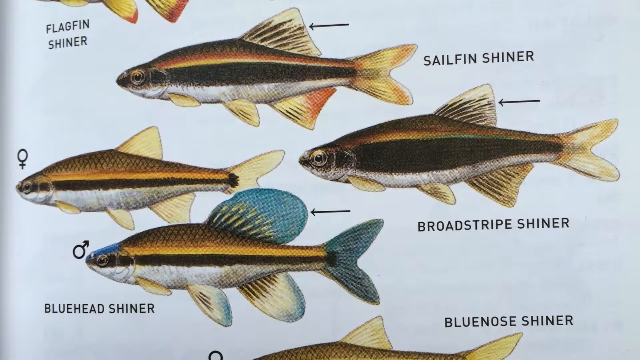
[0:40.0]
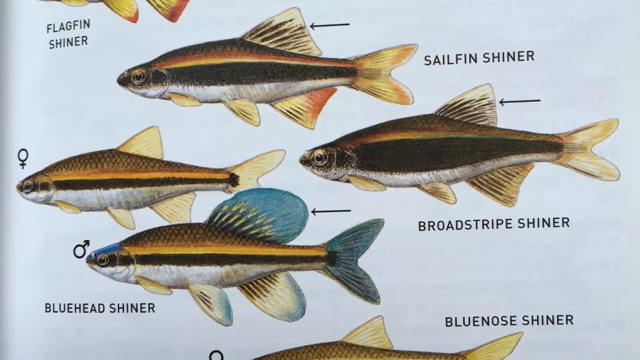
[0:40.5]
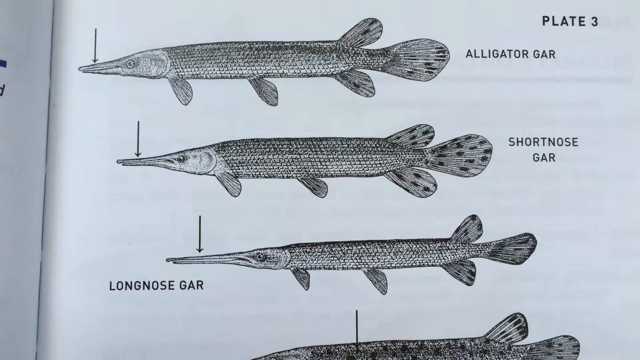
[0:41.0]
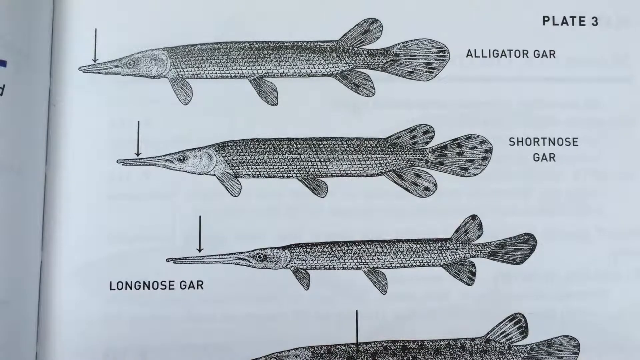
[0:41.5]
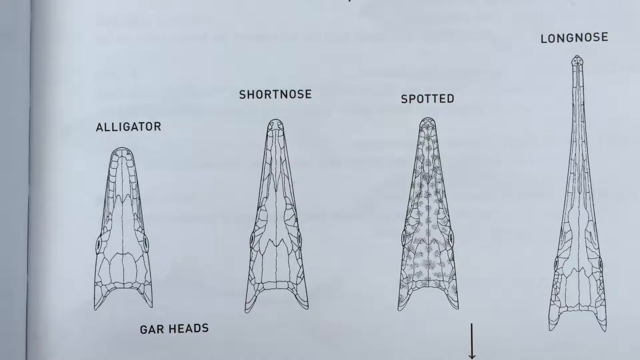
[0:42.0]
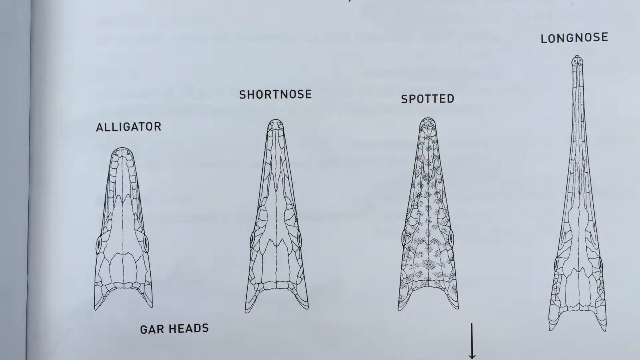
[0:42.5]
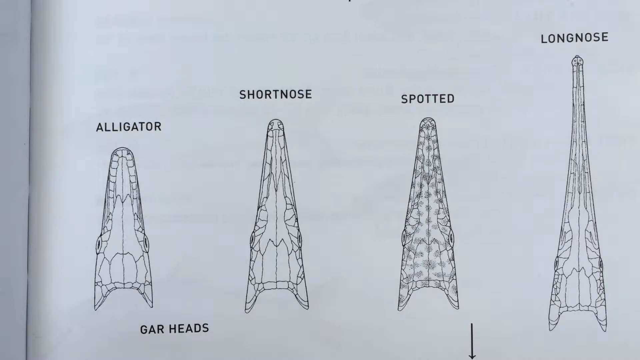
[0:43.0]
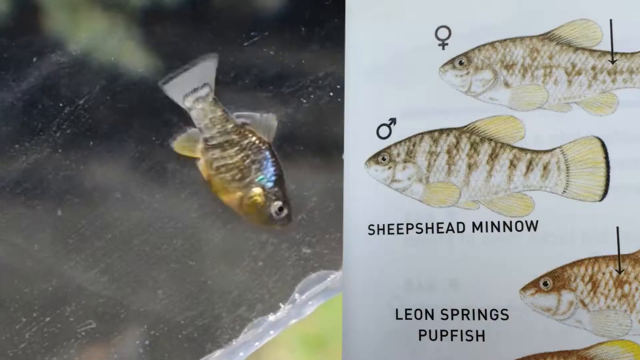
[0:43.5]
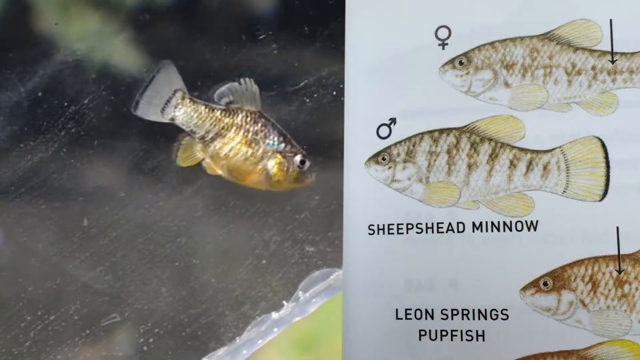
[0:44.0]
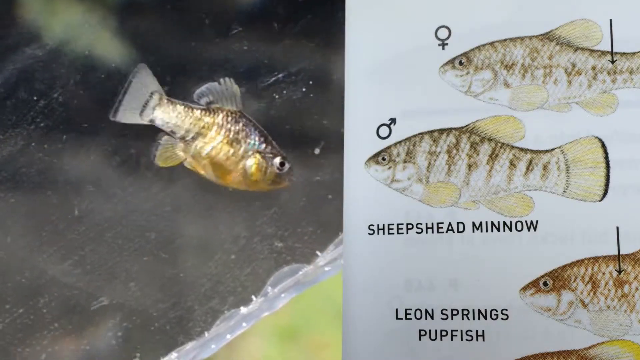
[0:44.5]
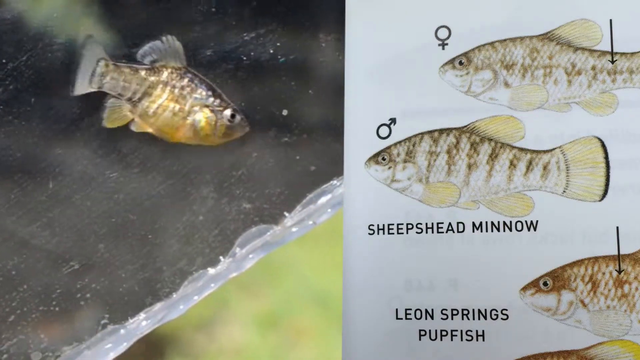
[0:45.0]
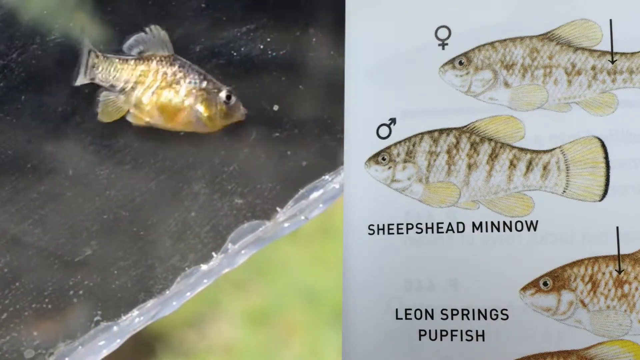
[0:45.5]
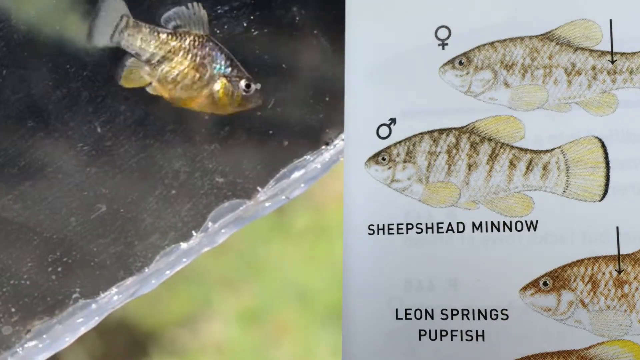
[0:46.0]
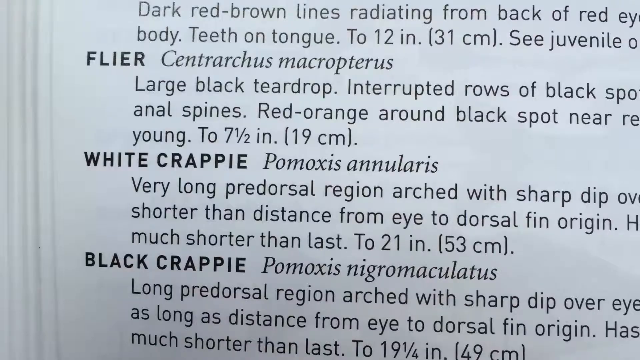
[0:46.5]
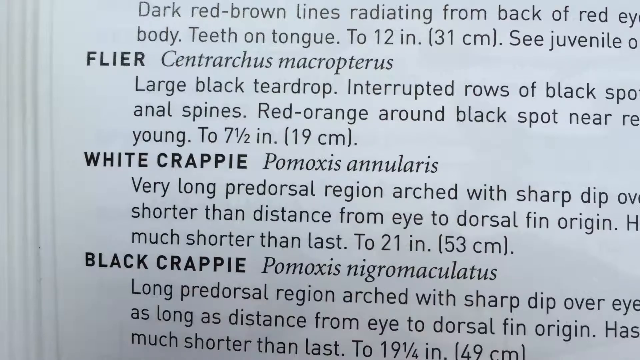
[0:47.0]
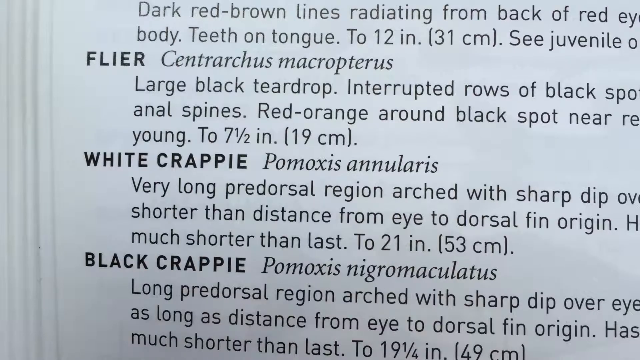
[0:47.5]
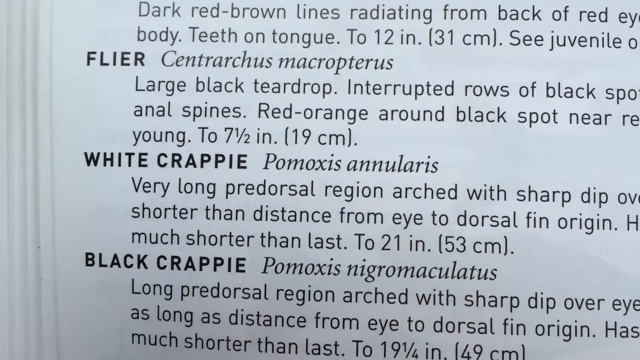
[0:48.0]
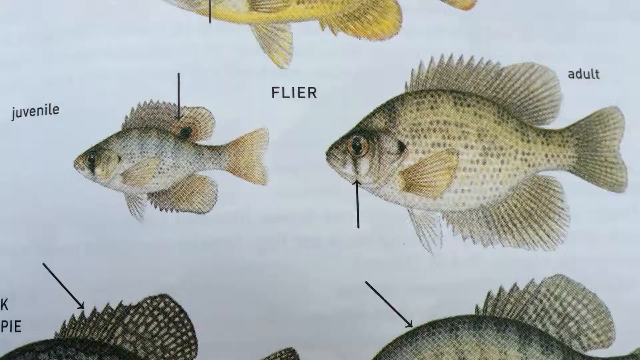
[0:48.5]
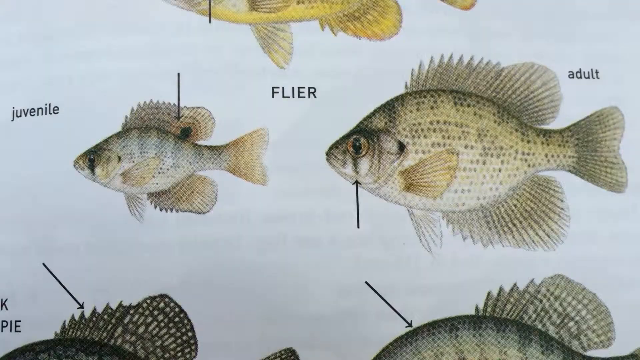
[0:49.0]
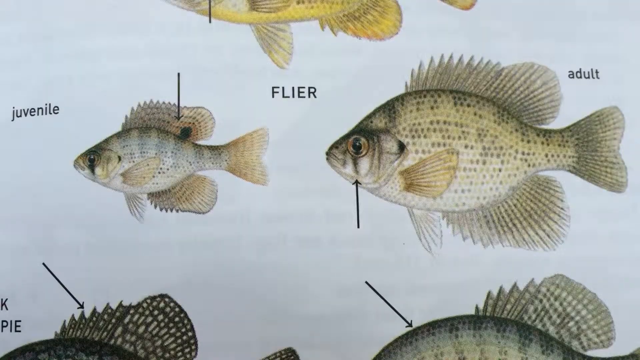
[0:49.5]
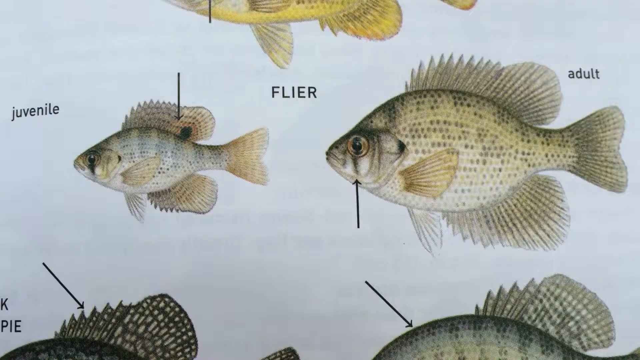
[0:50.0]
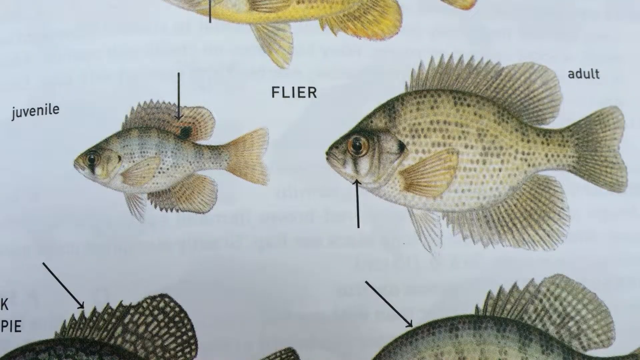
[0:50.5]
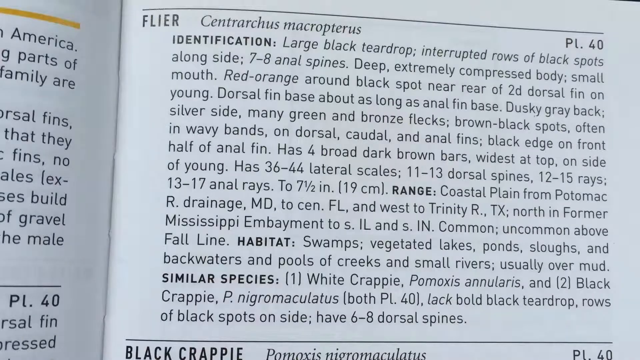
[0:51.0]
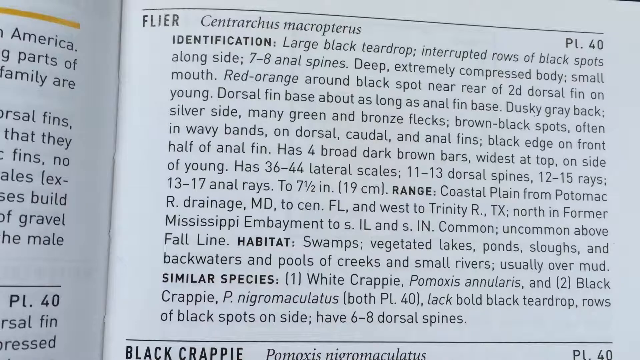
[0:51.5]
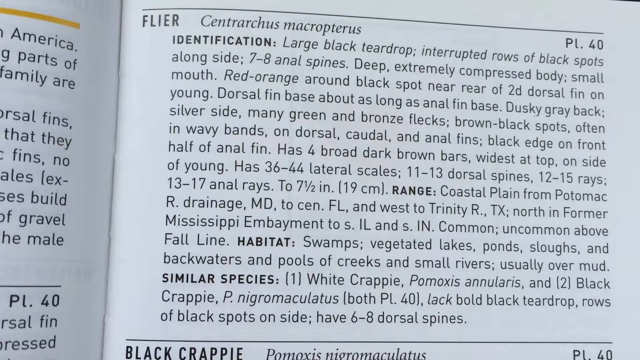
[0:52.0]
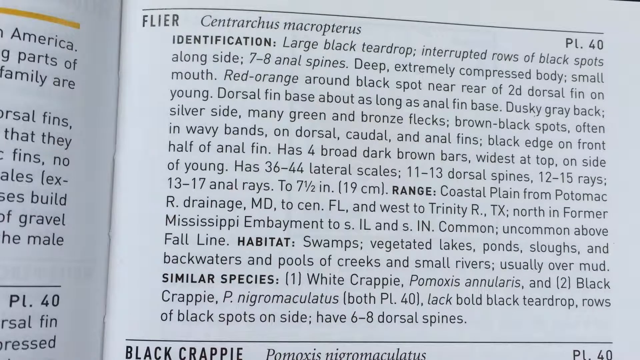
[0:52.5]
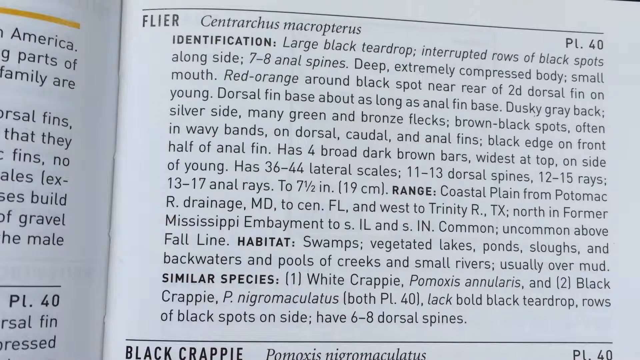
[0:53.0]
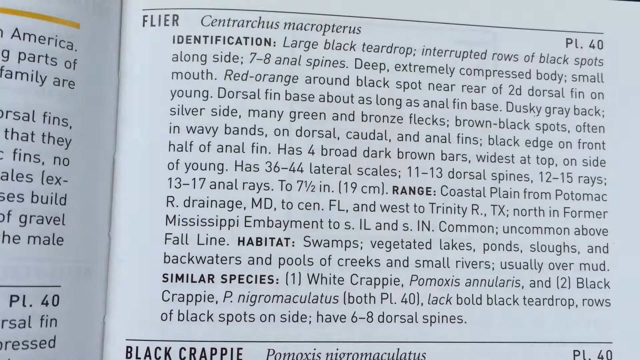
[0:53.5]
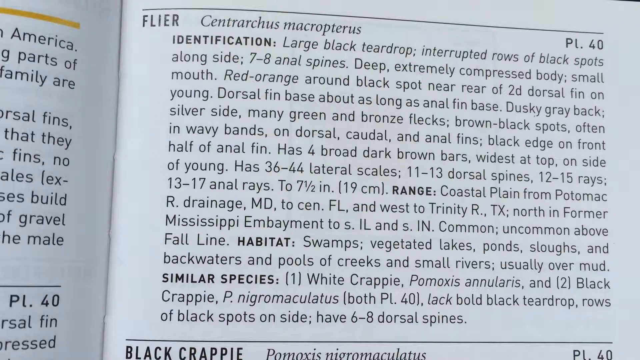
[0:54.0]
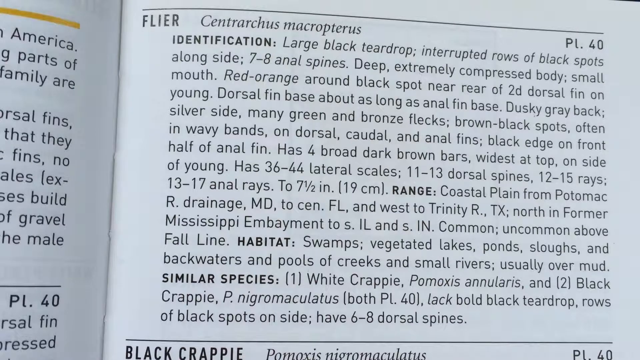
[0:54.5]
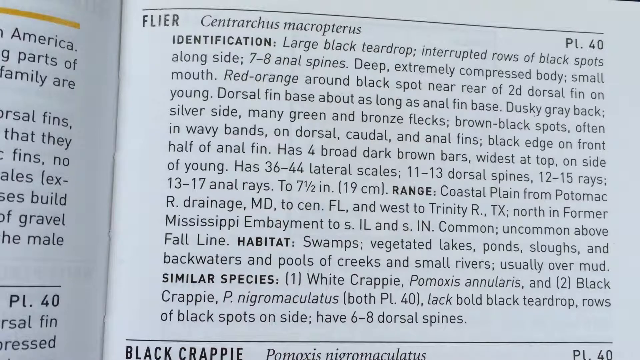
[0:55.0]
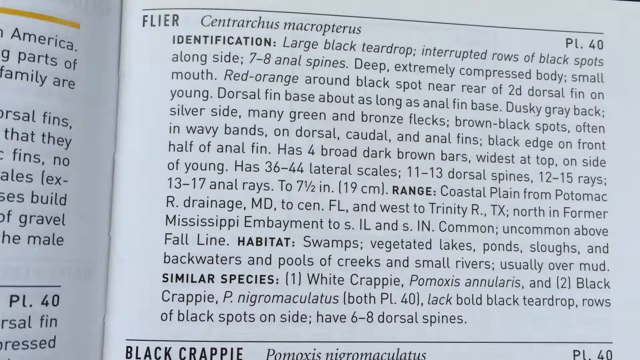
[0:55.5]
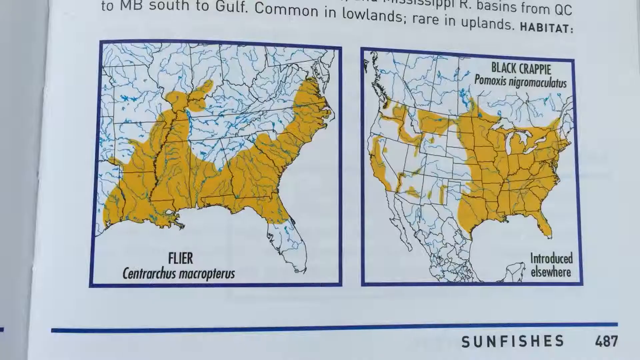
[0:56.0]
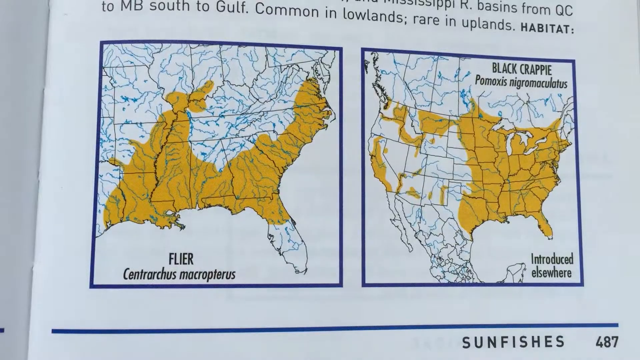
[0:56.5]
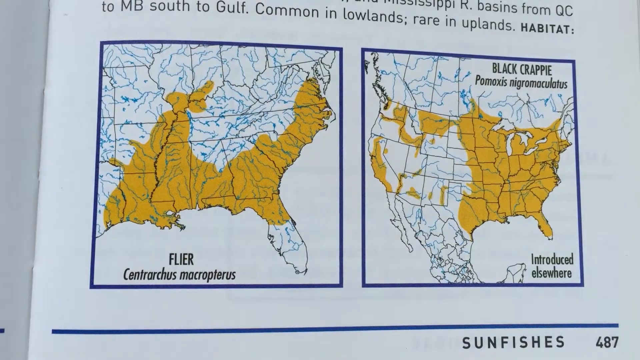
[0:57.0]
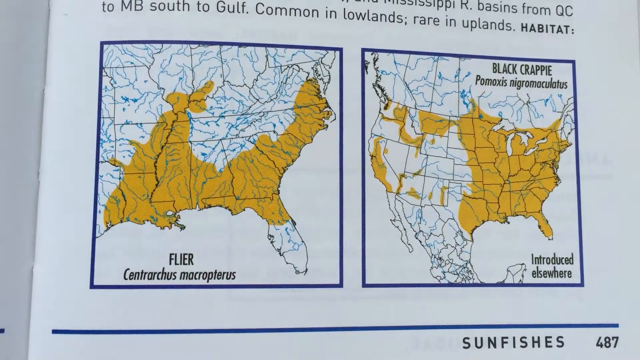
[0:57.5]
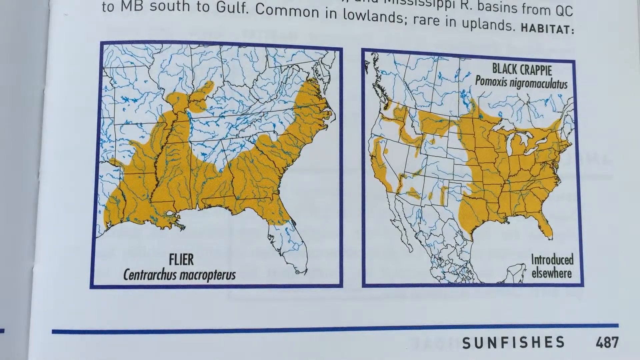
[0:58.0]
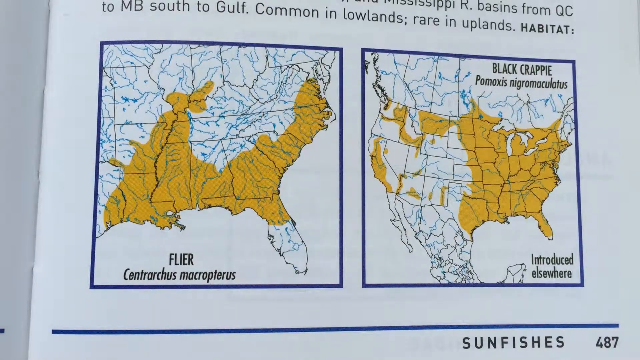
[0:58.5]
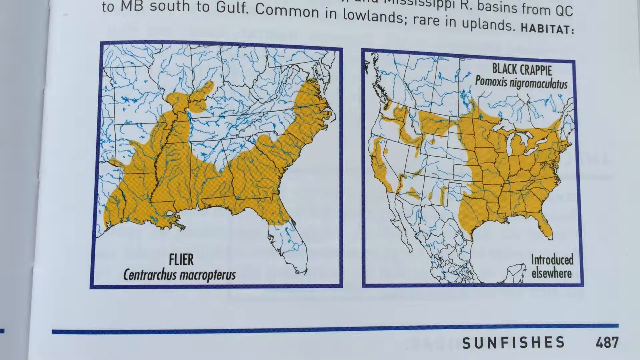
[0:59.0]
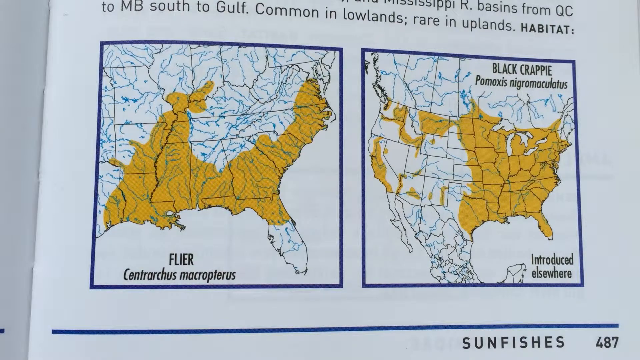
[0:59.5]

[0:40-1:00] More drawings of fish appear, something like alligator gar, shortnose gar and longnose gar. Then there are drawings of alligators; from the left they are labeled alligator, shortnose, spotted and longnose. The scene changes: on the left side a small fish swims in a pool, and on the right are sheepshead minnow in female and male form and Leon Springs pupfish. Next come descriptions of the flier, white crappie and black crappie, covering how they look and how big they are. An image shows a flier as a juvenile and as an adult, followed by a description of the flier covering its identification, range, habitat and similar species. Then a map shows where the flier is common in the U.S., and on the right side a map shows where the black crappie is common.